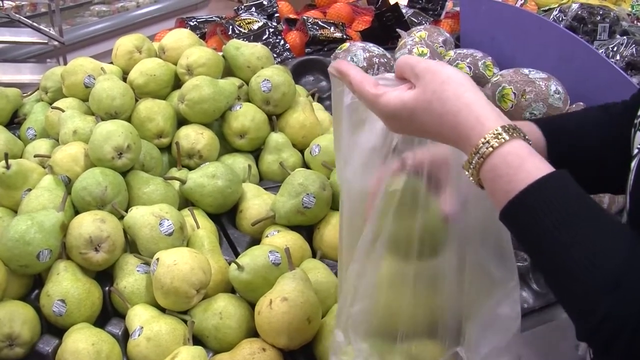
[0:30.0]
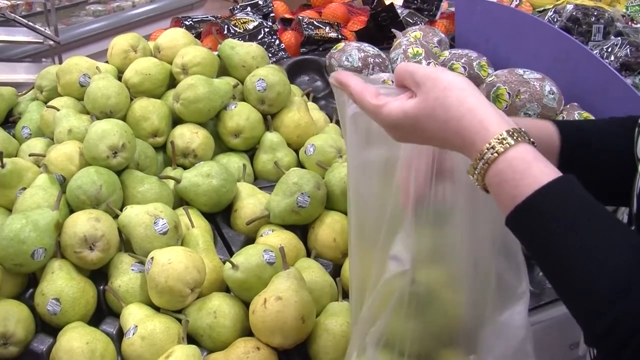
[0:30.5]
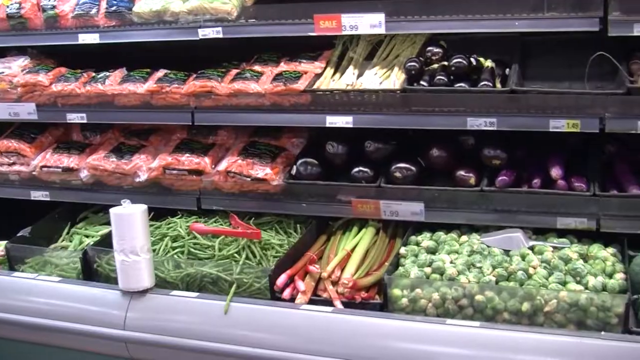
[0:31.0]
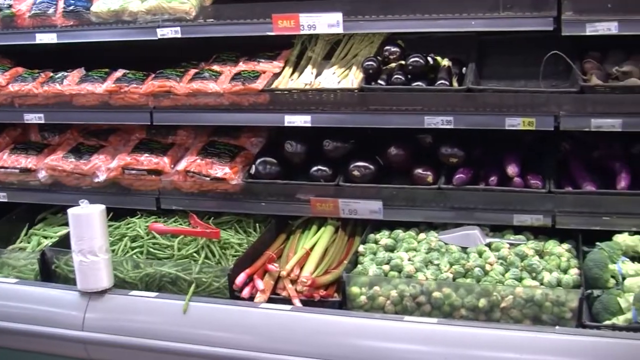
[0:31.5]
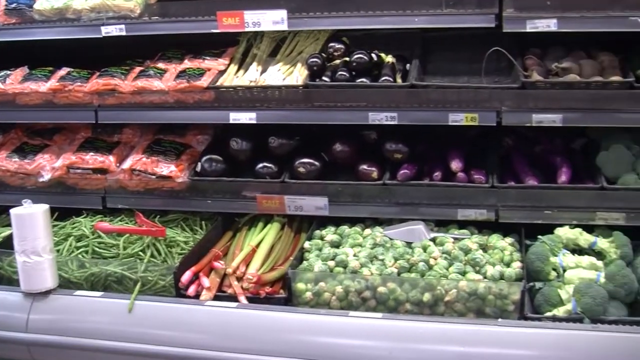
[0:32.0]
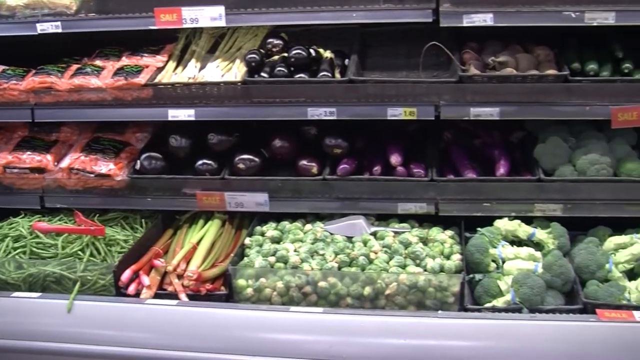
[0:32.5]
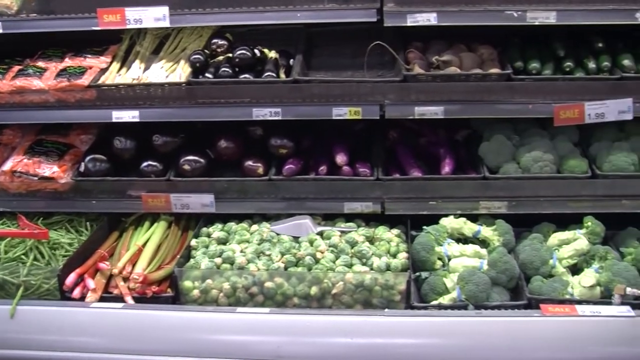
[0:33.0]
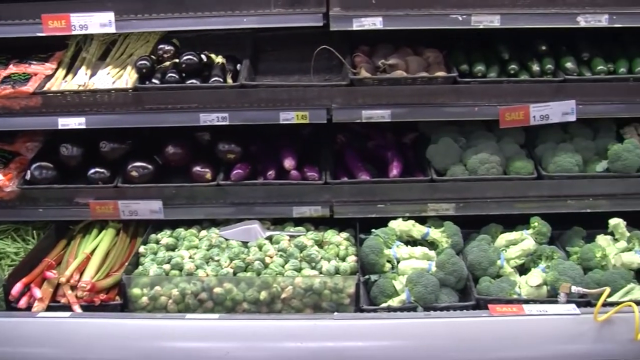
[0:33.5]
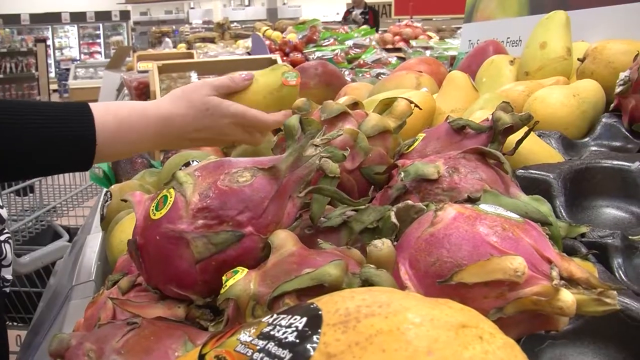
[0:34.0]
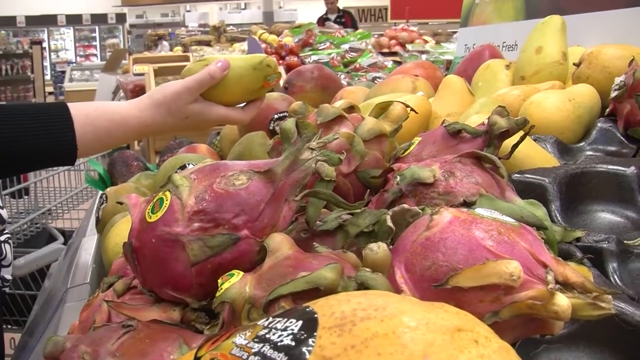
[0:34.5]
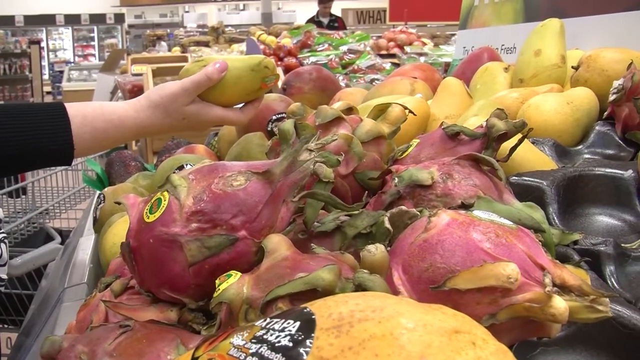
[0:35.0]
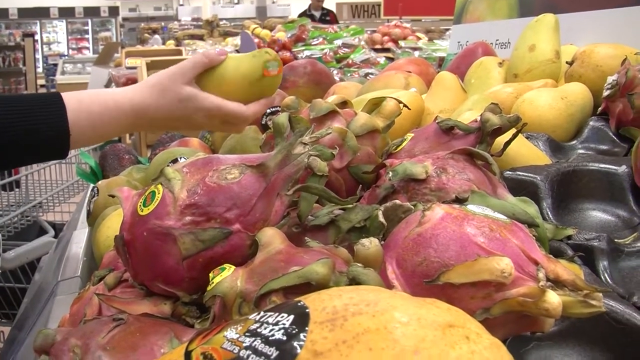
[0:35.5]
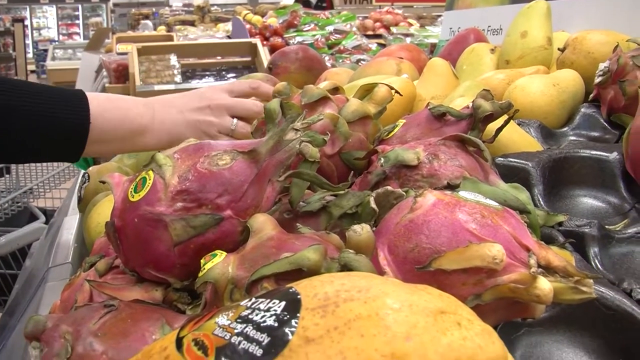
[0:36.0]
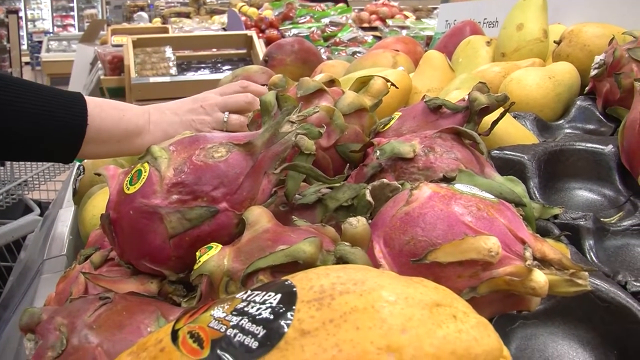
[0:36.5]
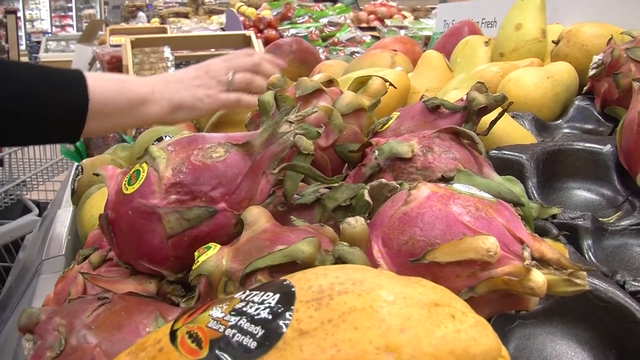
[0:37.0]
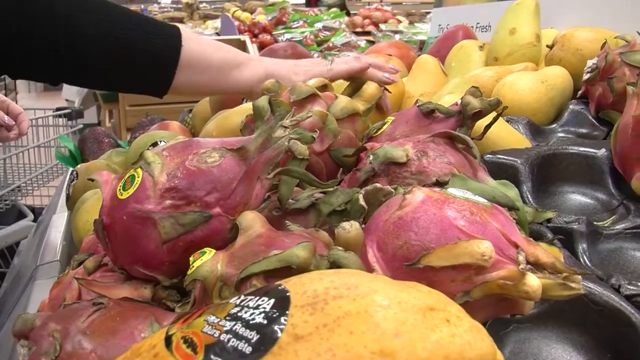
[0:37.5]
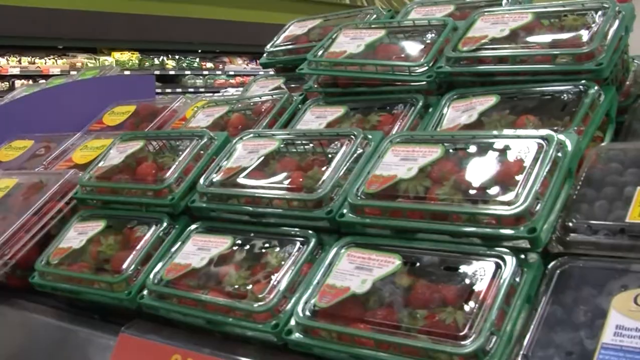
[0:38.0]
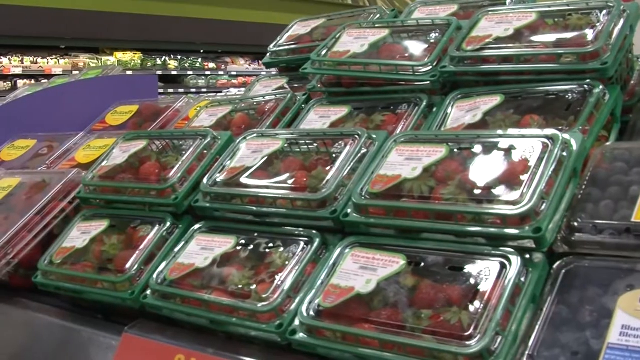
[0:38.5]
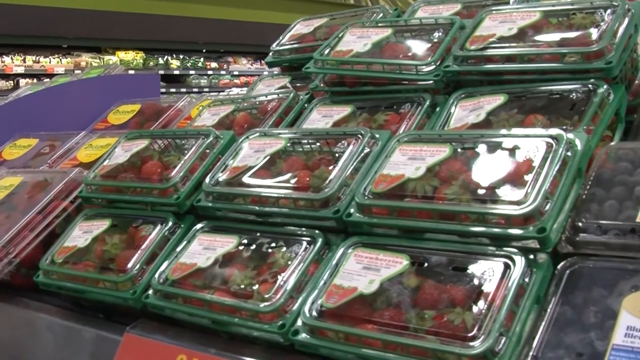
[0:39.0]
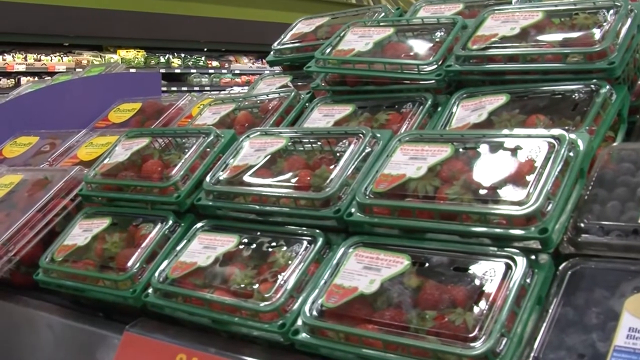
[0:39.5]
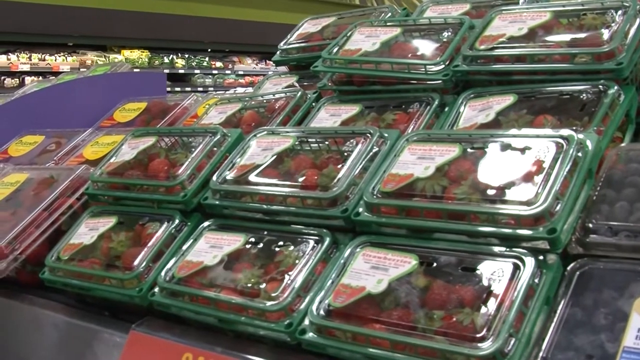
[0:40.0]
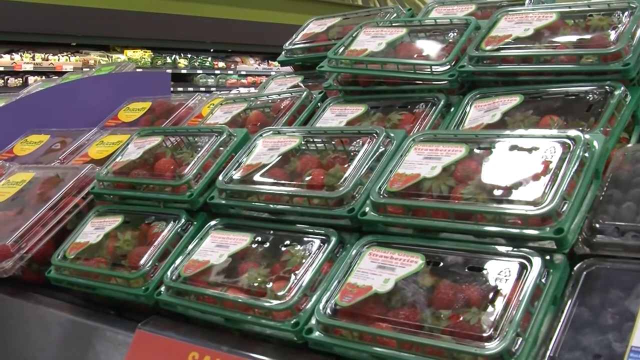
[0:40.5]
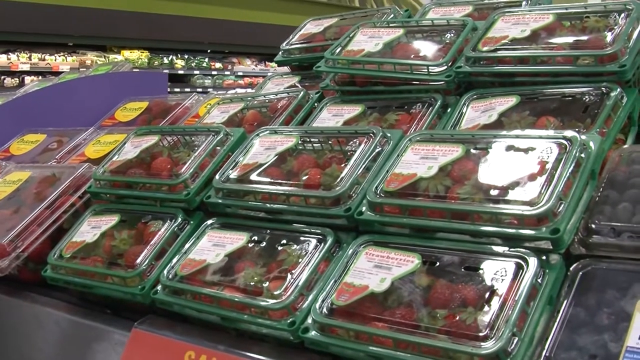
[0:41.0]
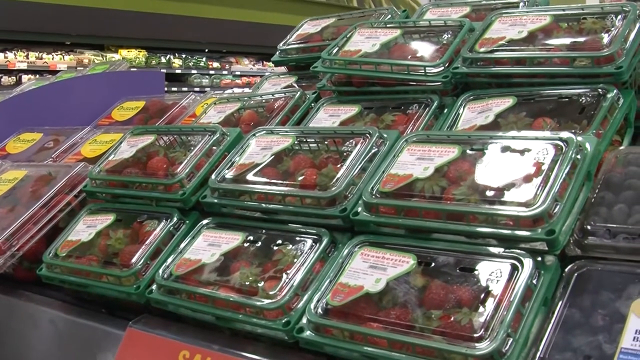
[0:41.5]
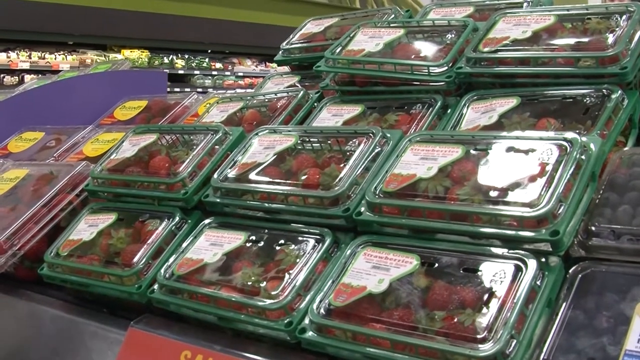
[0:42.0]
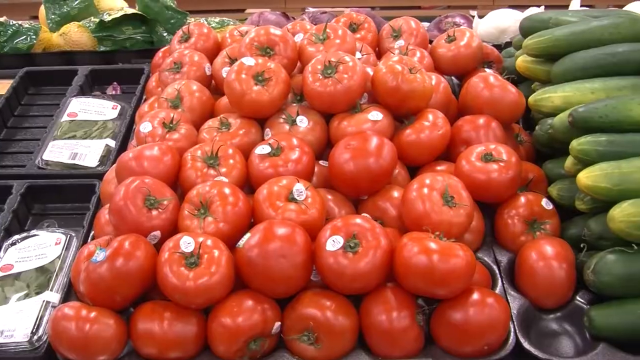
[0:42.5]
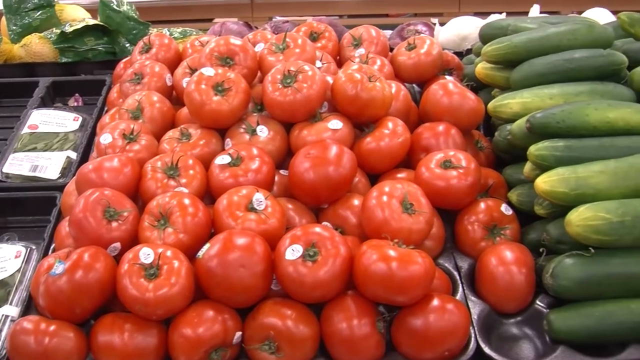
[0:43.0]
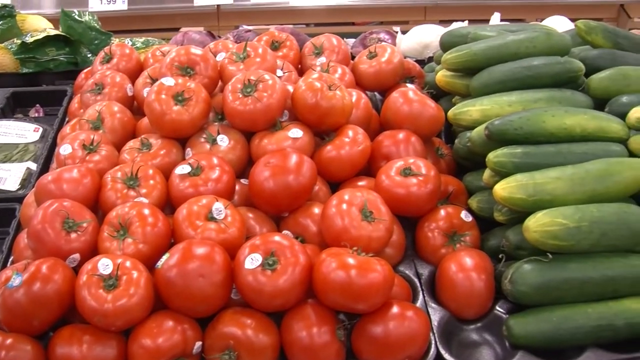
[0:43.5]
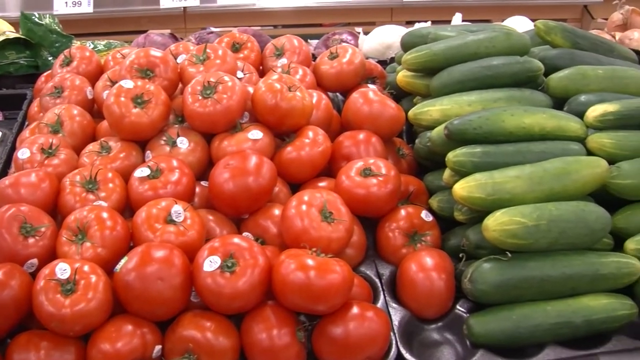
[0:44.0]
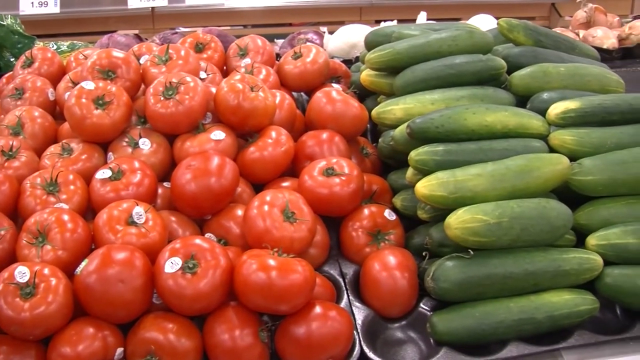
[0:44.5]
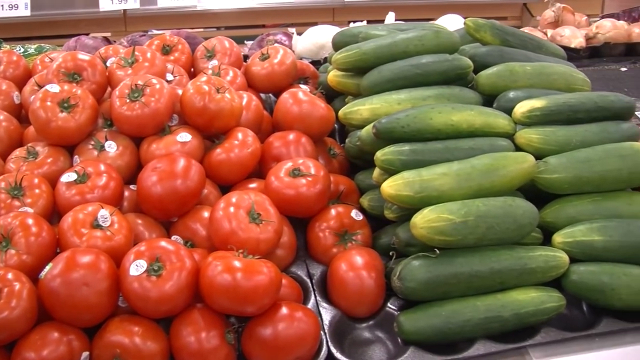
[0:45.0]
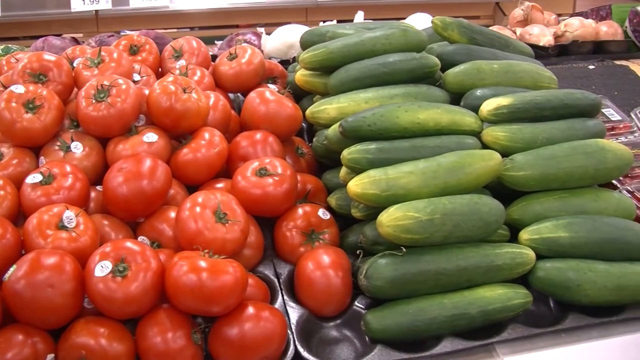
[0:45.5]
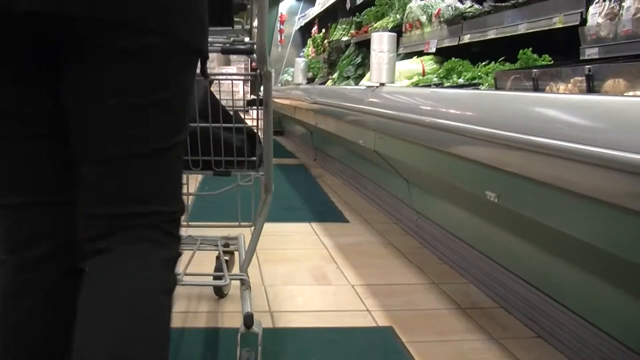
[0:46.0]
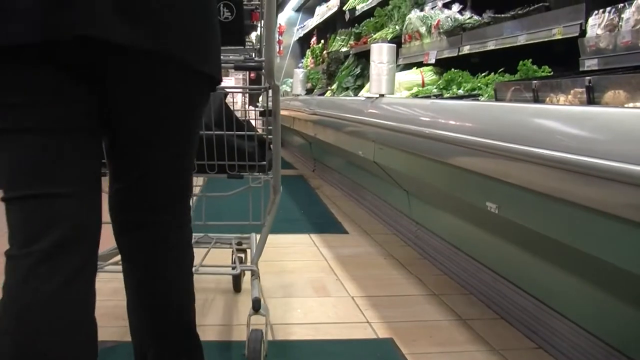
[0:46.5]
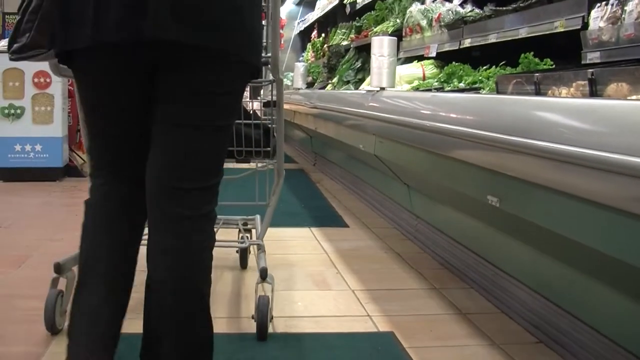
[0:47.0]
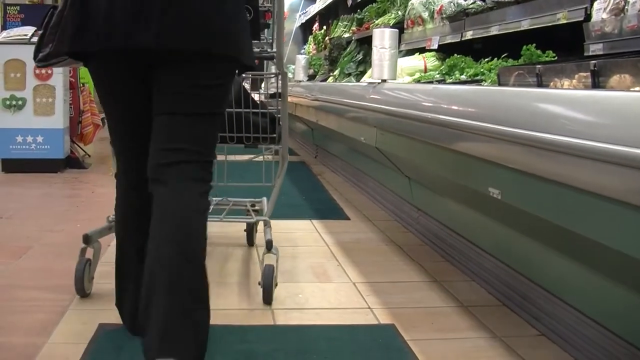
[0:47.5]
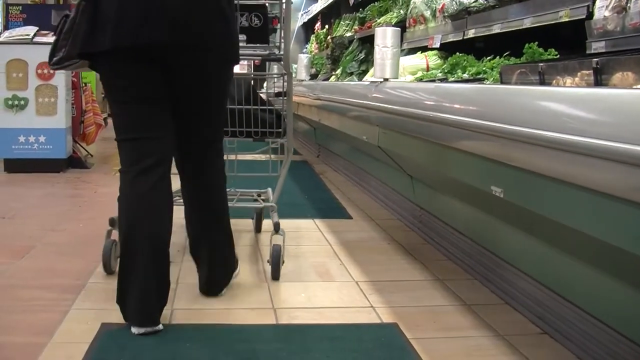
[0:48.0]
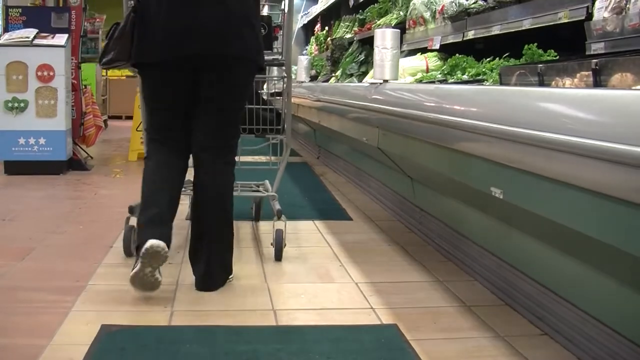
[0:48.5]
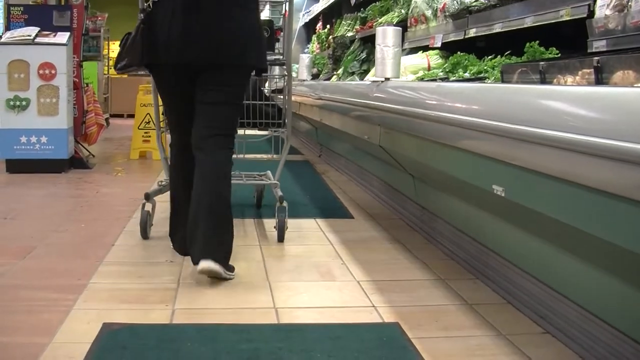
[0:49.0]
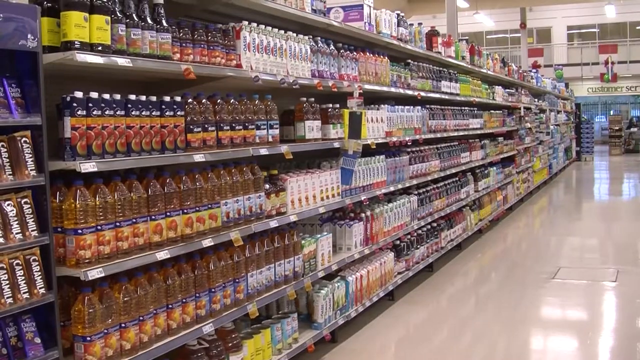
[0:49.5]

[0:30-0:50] The woman wears a long-sleeved black blouse and a gold watch on her left hand. She is light-skinned and holds a plastic bag in front of a bin of produce. There are a number of green pears next to some wrapped coconuts, and she picks green pears out of the bin and places them in the bag. A wide-angle shot shows other produce aisles with carrots in a bag, string green beans, what appear to be broccoli sprouts, eggplants and broccoli stalks. The same woman is then at a separate aisle, picking up other fruit products, pears or potatoes, and putting them back down. Another shot shows green plastic containers of strawberries as the camera focuses on them. Next, tomatoes in a produce aisle are next to a large amount of stacked cucumbers. A low-angle shot shows a woman walking with her grocery cart next to produce on the right side, before the scene changes to an aisle of beverages and cooking oils.